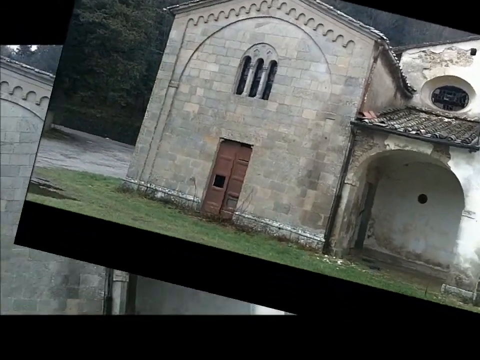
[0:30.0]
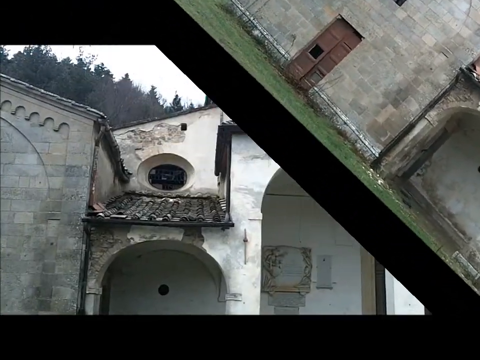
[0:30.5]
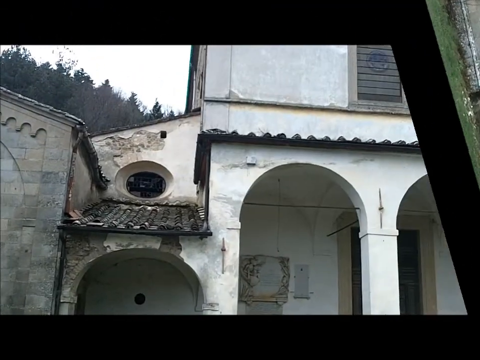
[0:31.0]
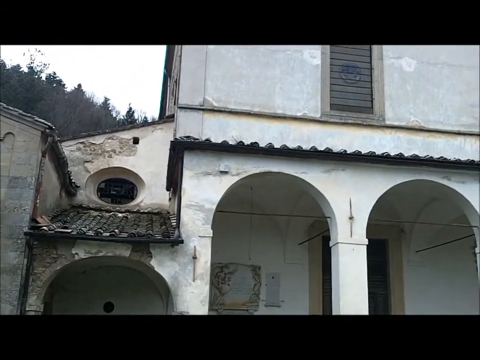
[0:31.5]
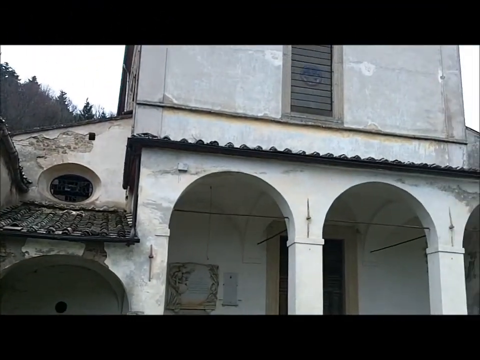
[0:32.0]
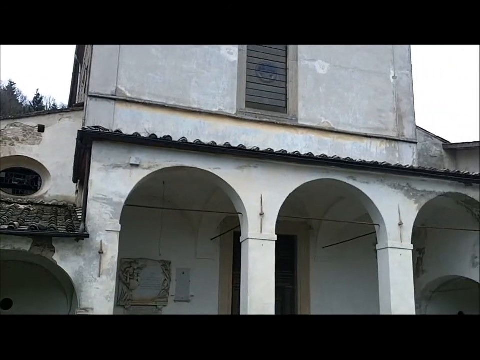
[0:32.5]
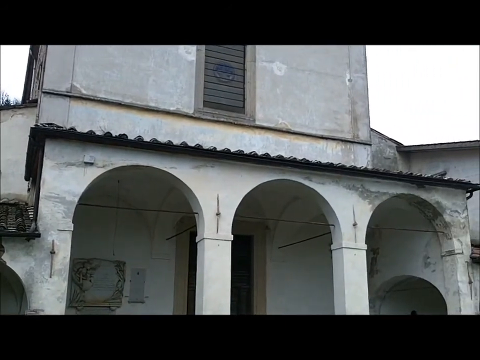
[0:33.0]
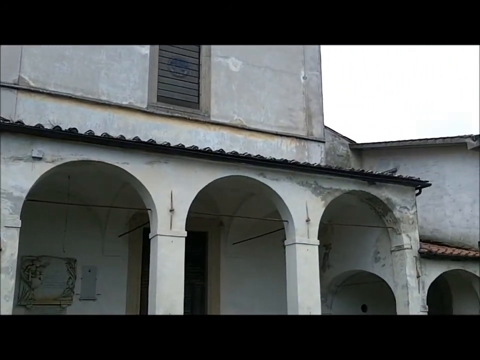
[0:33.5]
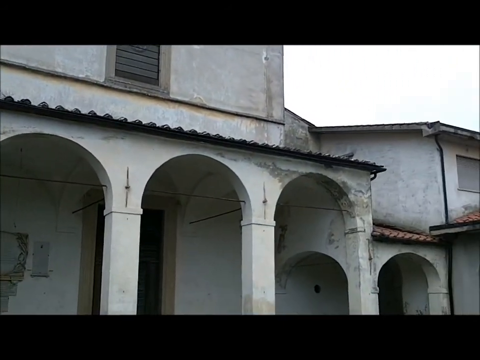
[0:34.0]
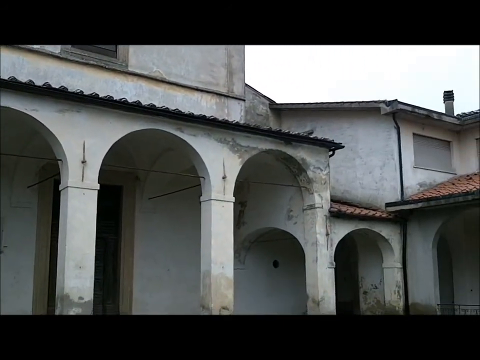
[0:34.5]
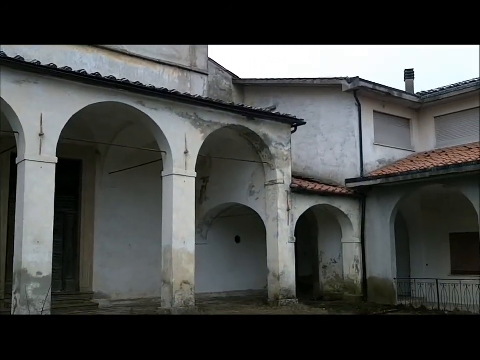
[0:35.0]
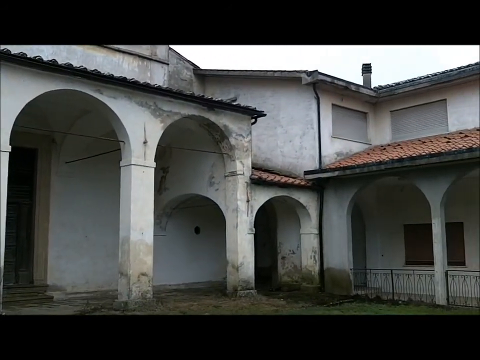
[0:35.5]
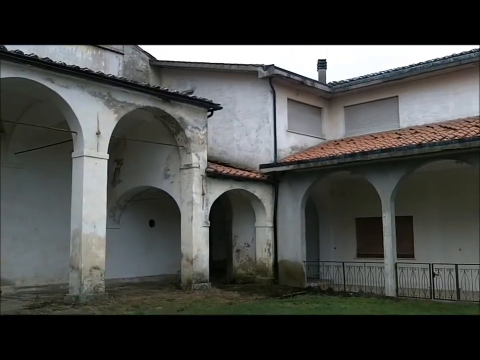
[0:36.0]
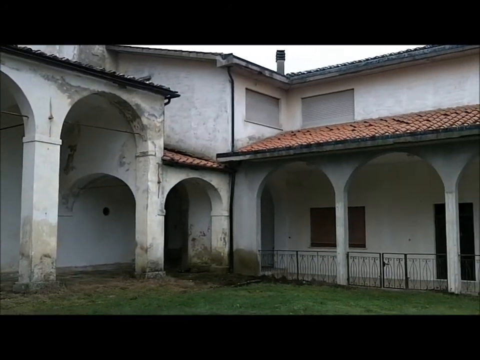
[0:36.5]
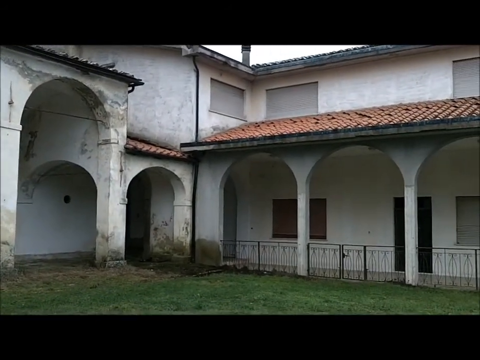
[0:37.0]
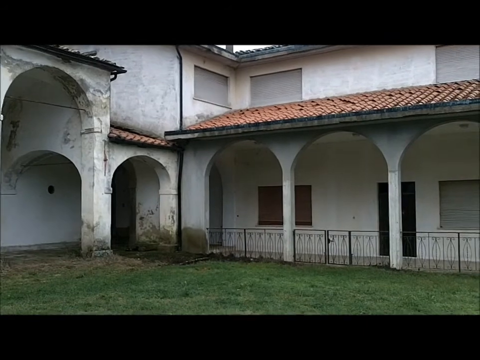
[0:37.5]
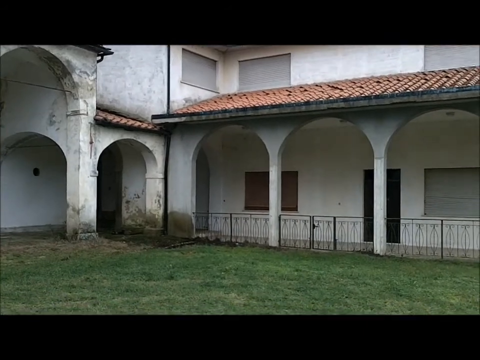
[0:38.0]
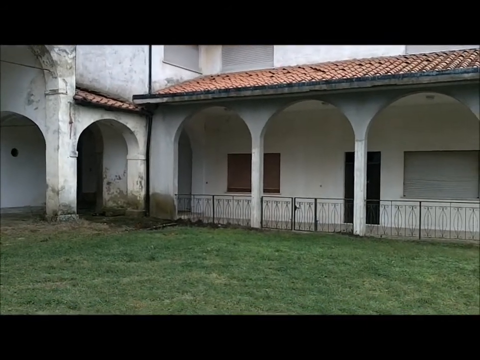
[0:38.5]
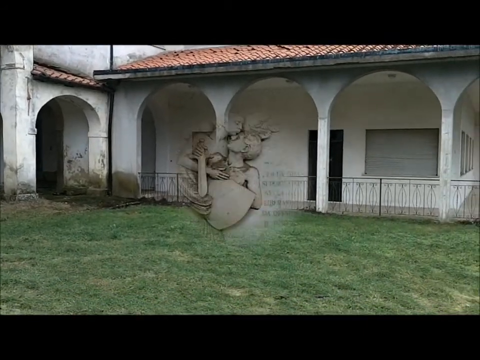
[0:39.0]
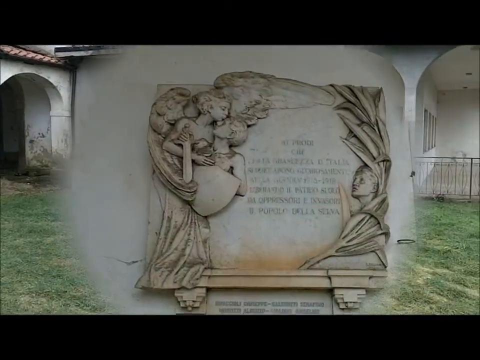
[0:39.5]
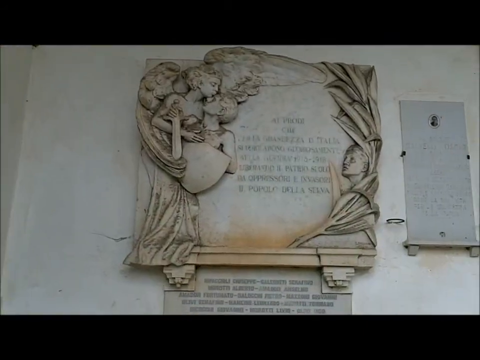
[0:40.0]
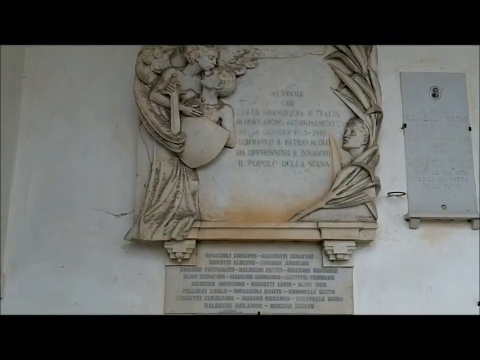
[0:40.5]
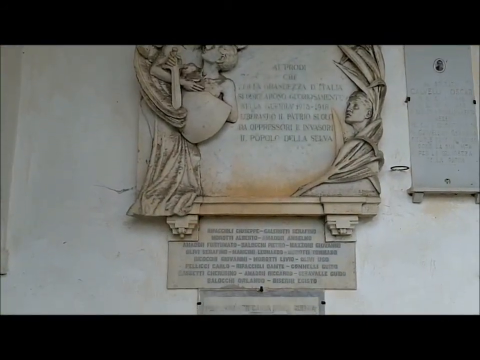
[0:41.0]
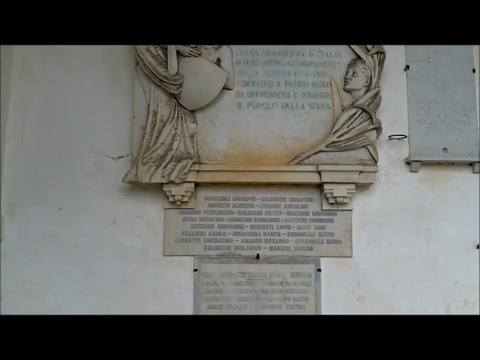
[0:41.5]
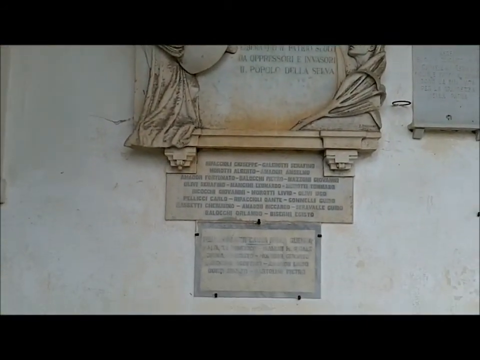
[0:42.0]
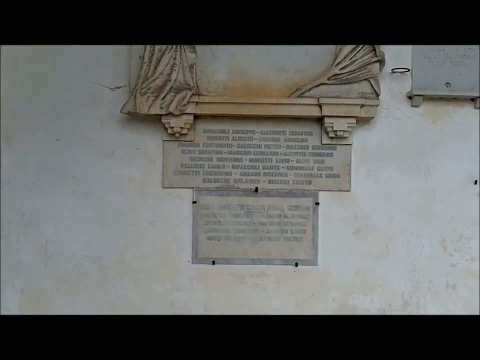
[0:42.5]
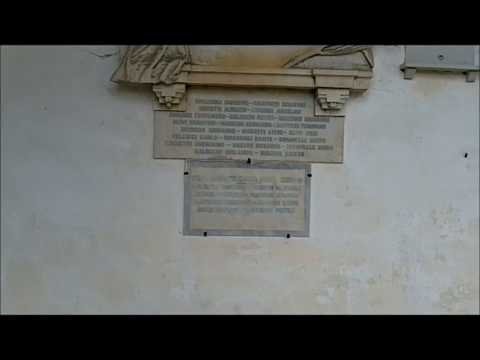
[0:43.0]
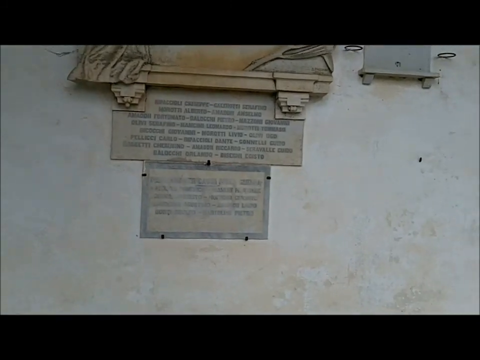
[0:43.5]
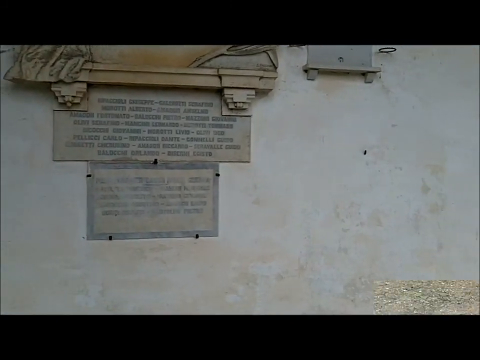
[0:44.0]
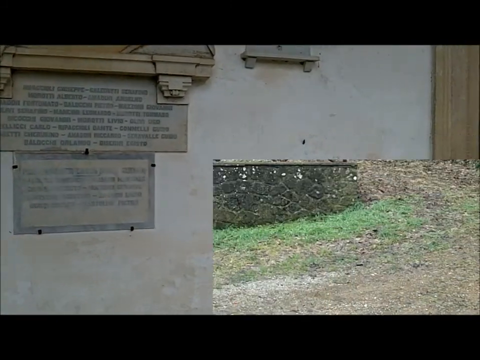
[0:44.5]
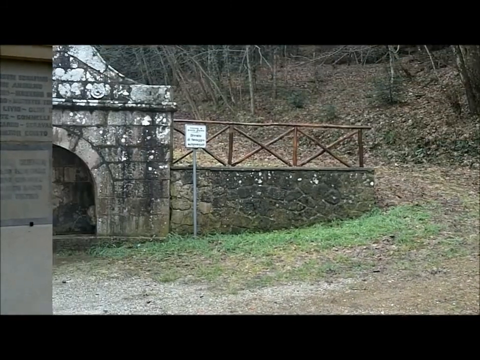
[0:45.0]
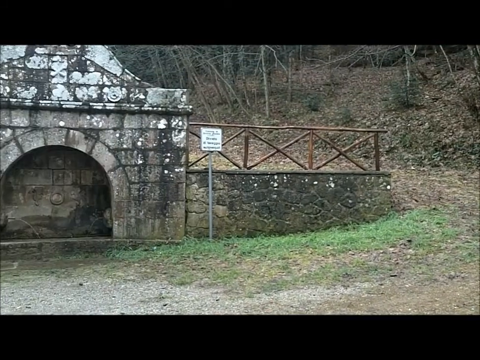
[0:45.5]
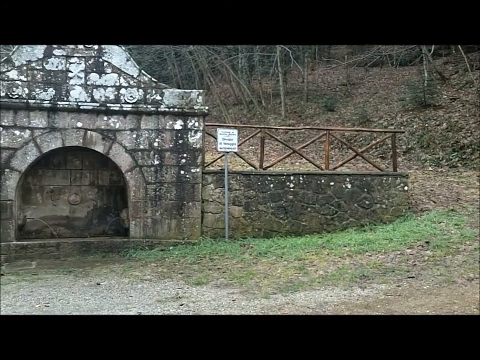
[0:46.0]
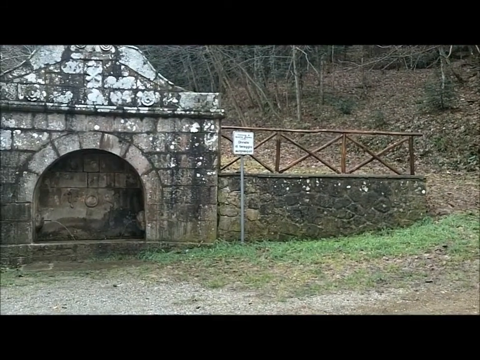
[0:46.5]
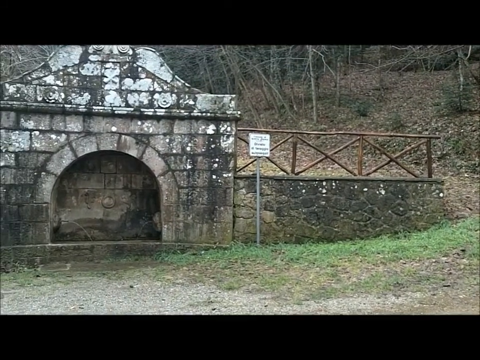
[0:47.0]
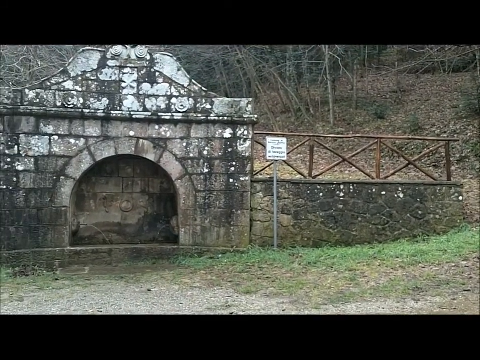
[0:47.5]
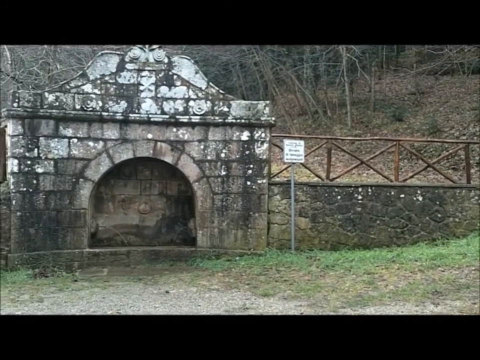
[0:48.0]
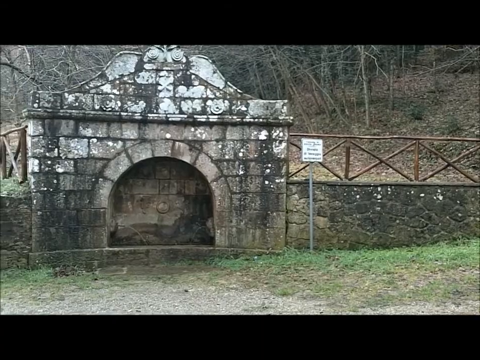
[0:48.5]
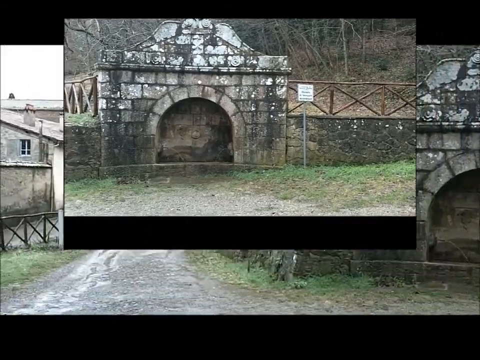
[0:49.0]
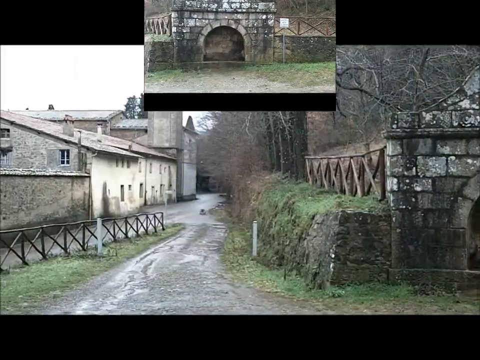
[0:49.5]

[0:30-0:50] The second floor is shown. The monastery looks like it has not been kept in top shape, with some of the paint coming off, especially on the exterior walls. Inside the monastery is a plaque with about three sections; the first section has engravings of what looks like an angel taking care of a person, and there are about three plaques with engraved text. Another part of the monastery is shown, which is quite long, and some of its exterior walls have stains. The abbey has arches and is very plain. It is not very tall, with just a few levels.